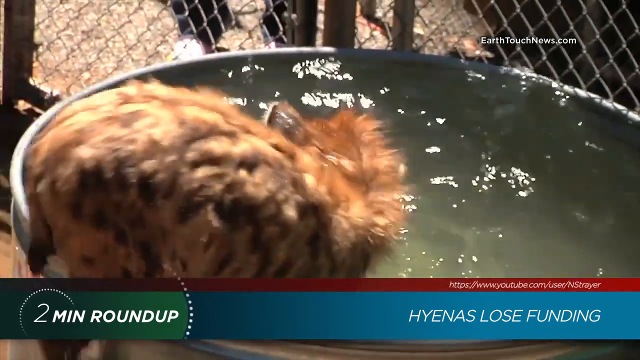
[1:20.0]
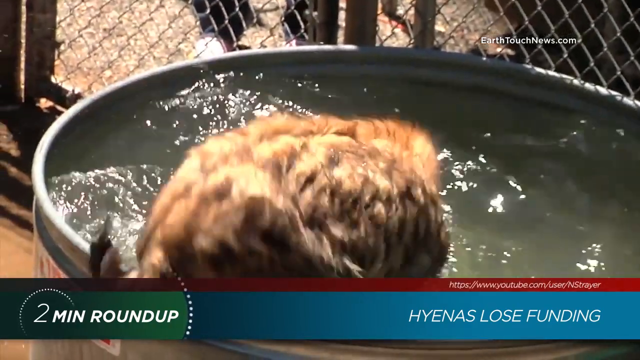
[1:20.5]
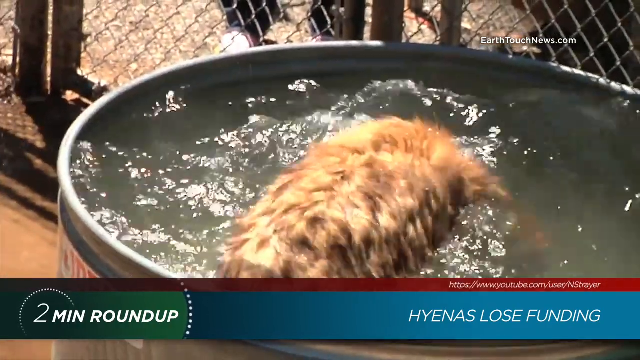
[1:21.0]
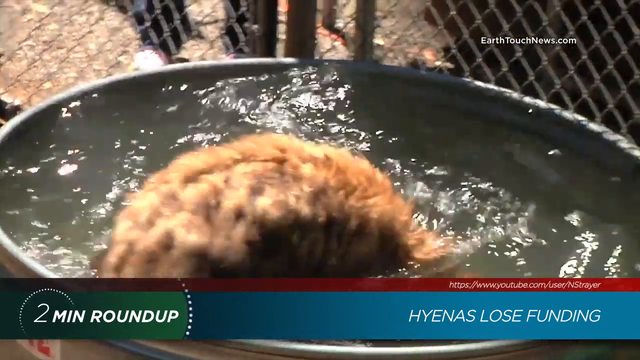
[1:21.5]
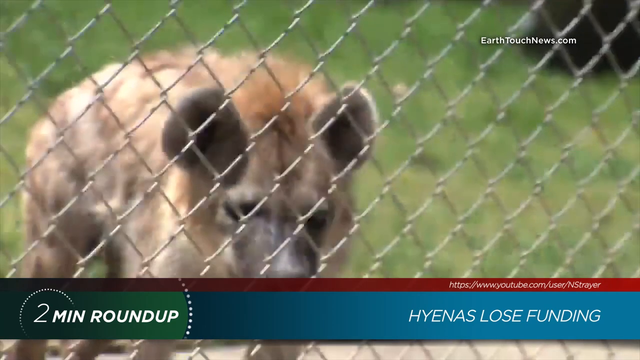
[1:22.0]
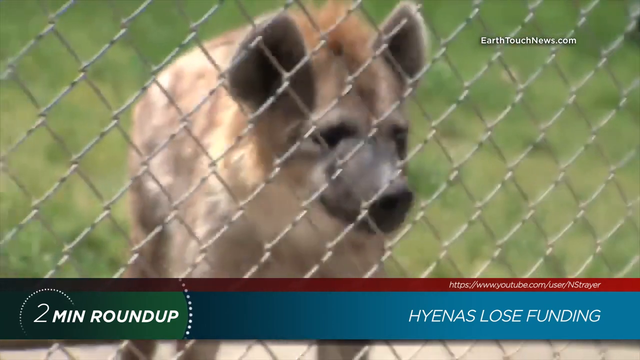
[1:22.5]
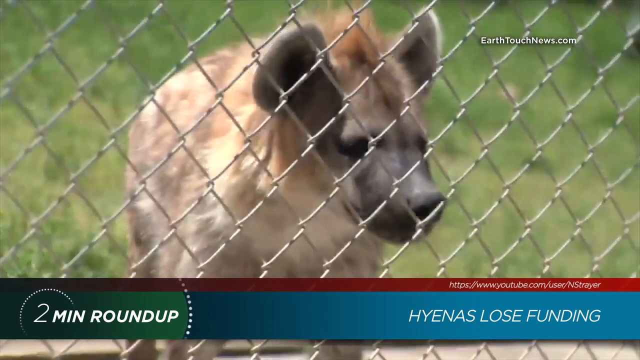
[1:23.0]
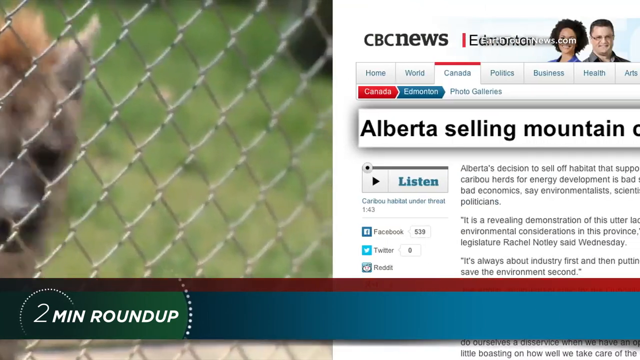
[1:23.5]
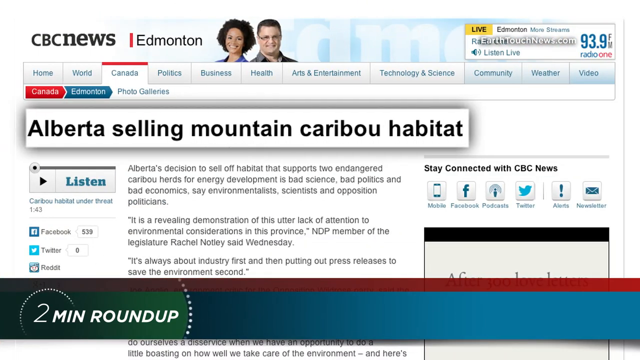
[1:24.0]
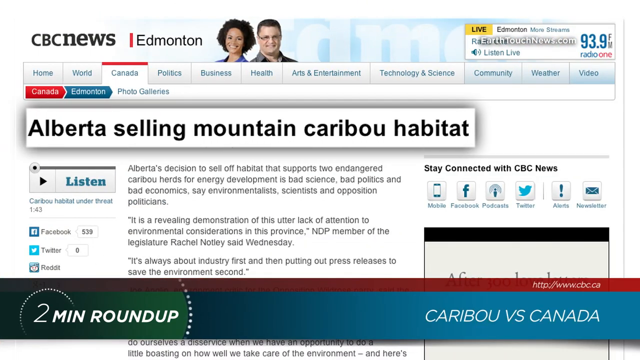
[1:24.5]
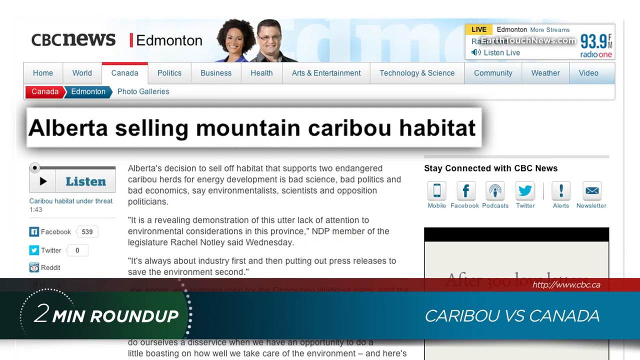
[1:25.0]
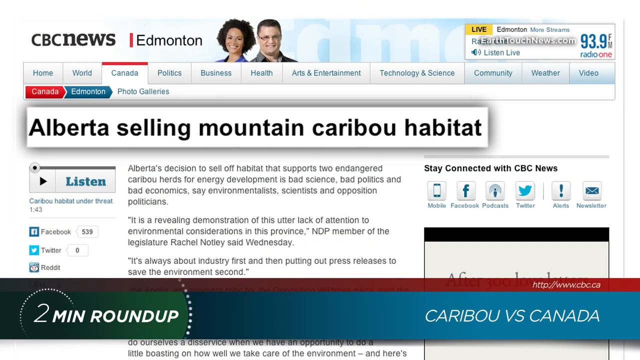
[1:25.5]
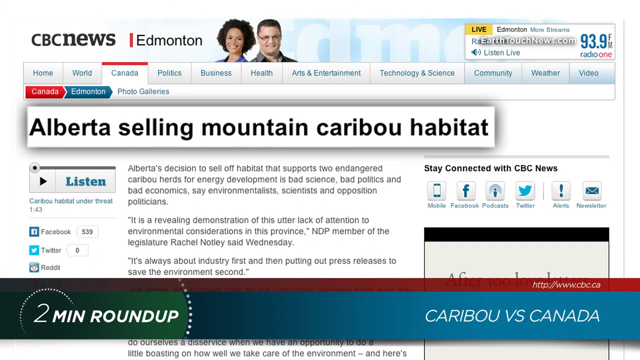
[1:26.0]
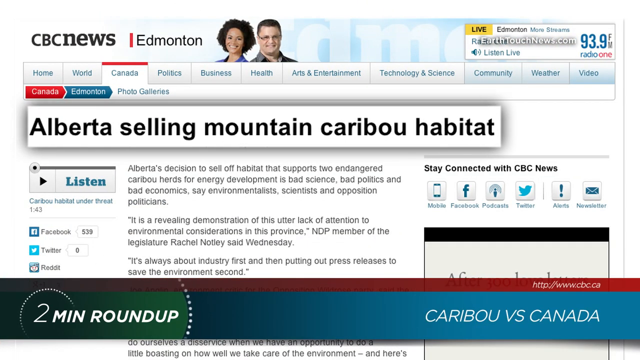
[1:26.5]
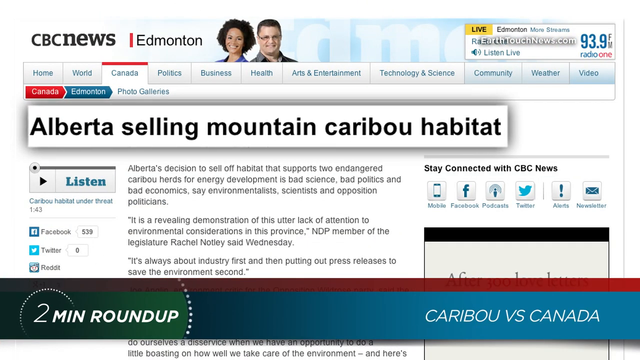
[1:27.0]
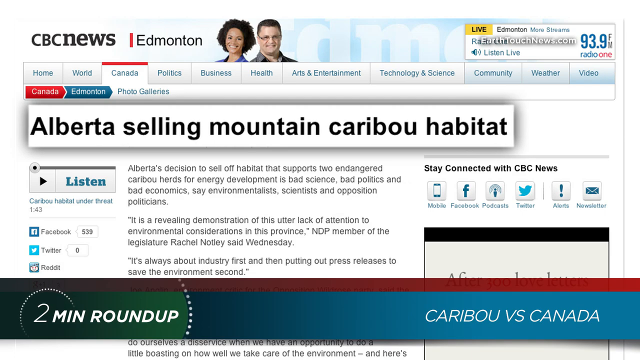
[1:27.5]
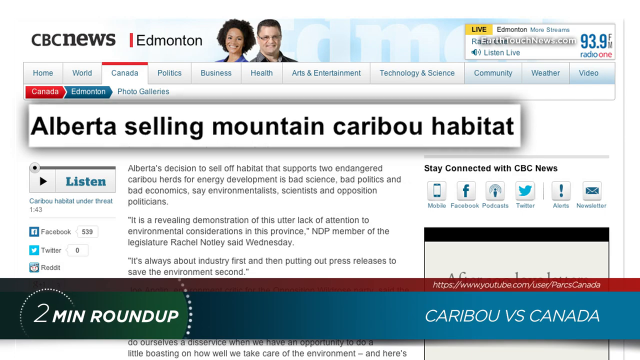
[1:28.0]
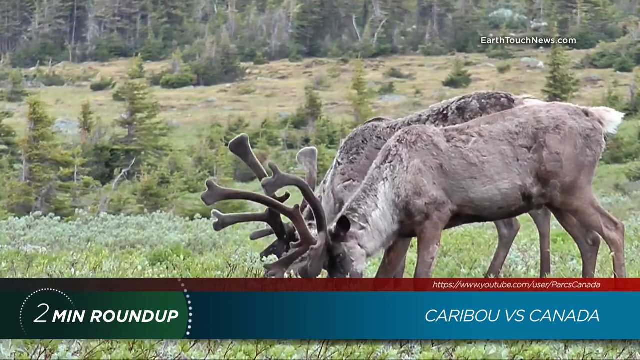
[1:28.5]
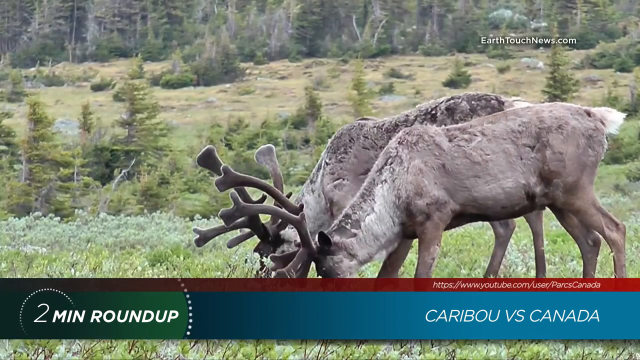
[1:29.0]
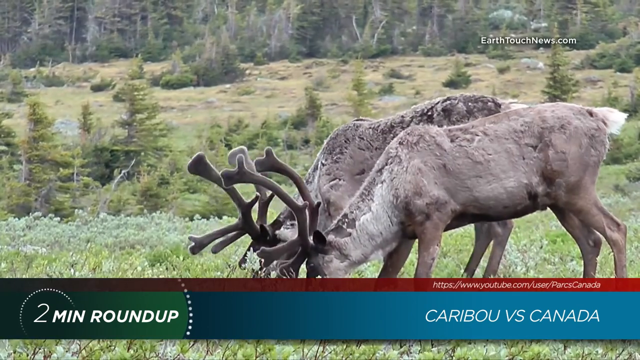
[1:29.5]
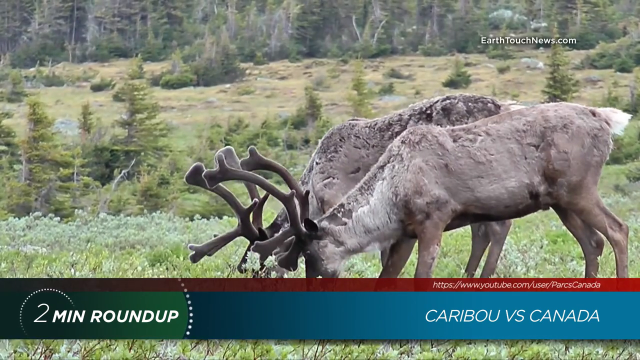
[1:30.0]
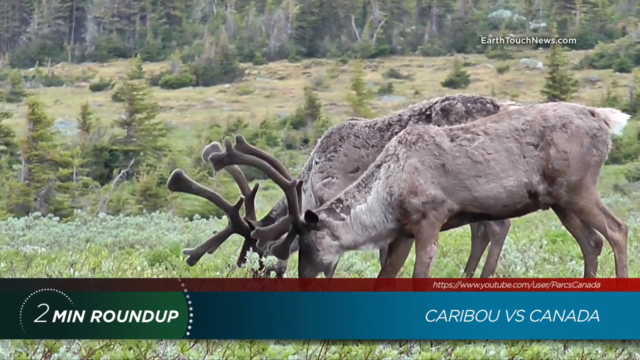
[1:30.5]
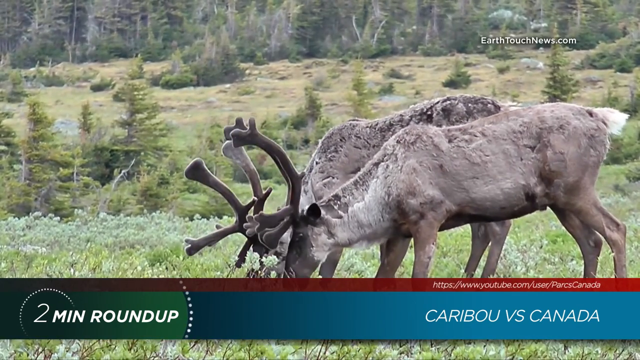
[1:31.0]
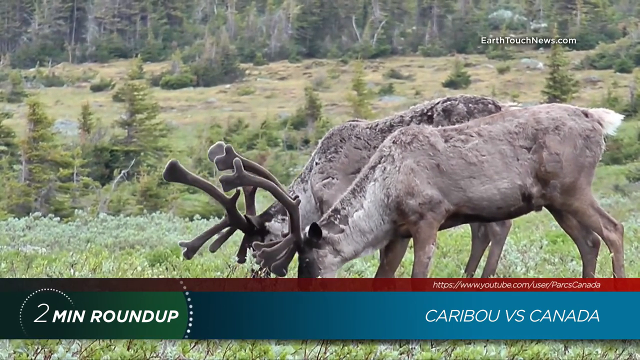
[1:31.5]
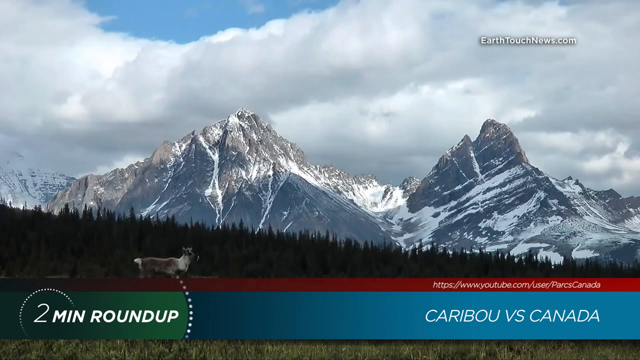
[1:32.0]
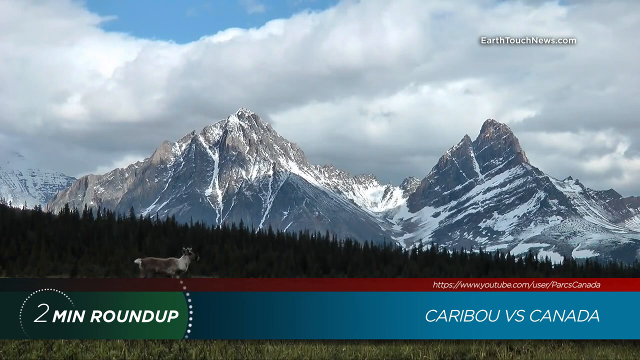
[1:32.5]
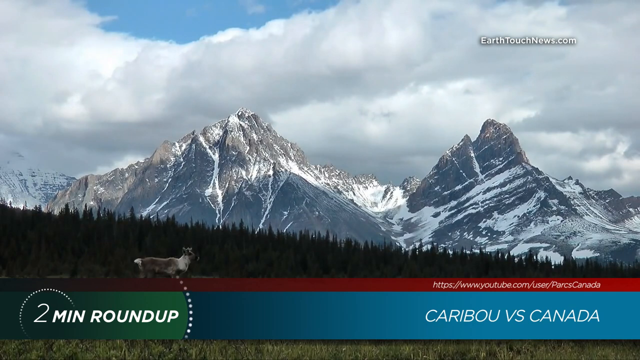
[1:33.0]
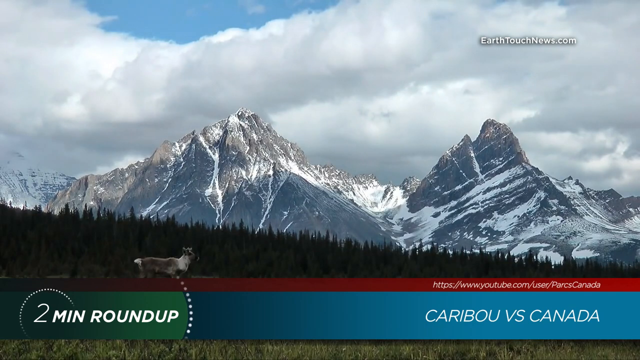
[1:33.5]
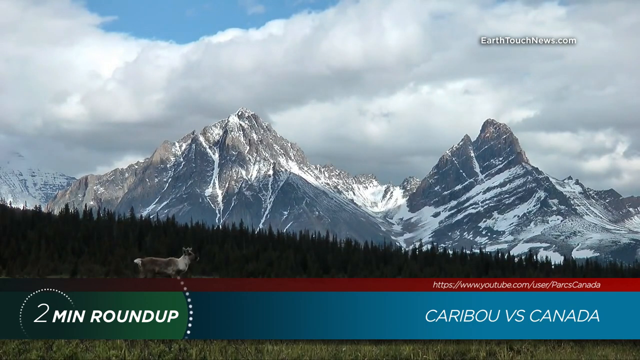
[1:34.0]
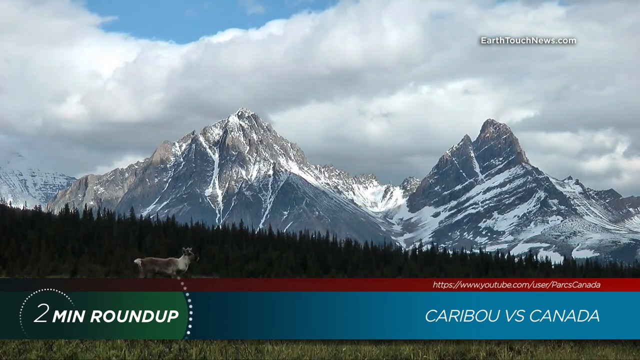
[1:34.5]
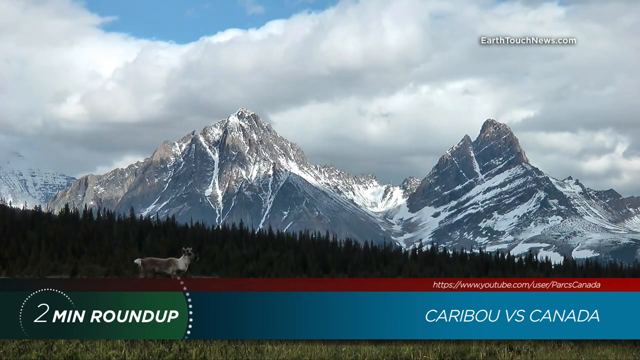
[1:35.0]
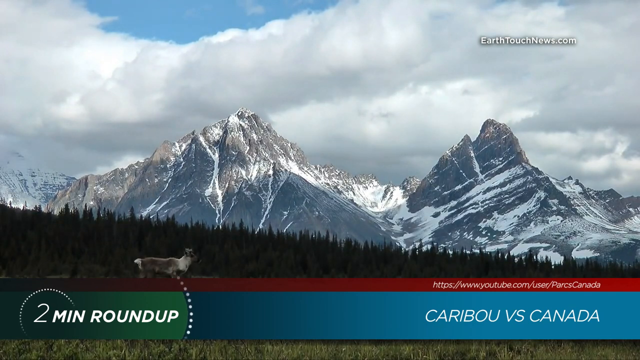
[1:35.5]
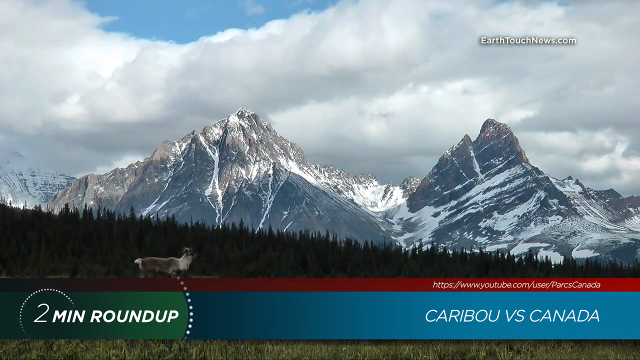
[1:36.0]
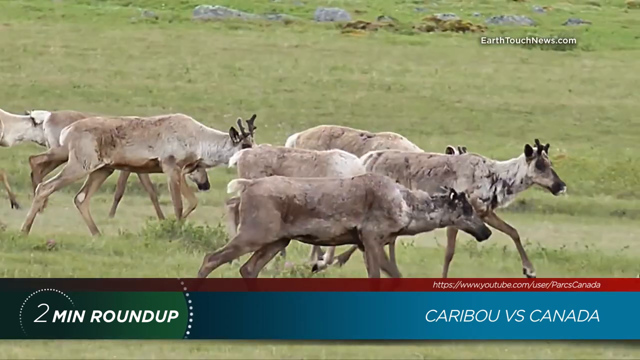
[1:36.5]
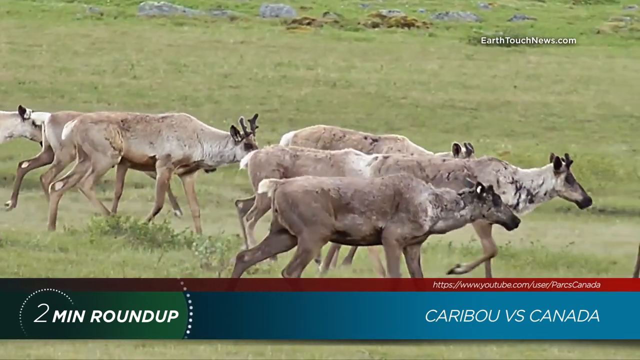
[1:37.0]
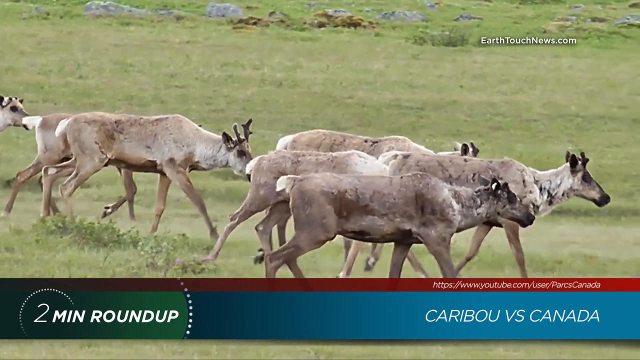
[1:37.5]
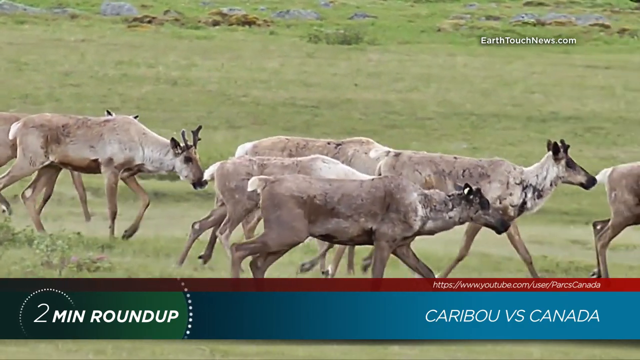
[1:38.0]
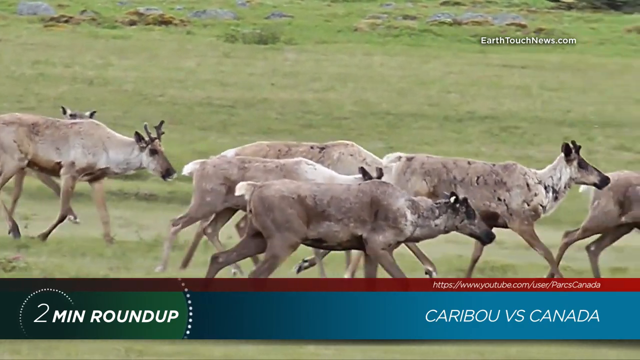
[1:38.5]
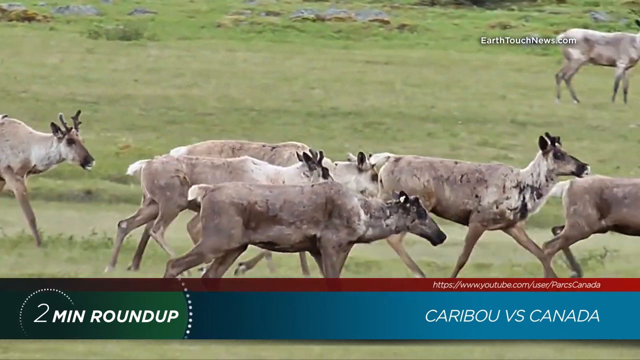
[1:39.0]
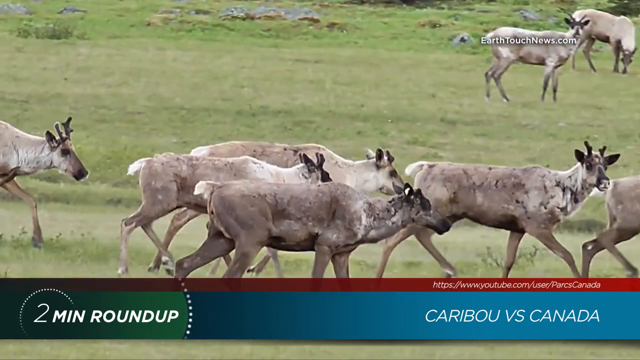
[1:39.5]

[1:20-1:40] What looks like a baby hyena is getting into a big metal tin bucket filled with water. Next, behind a chain-link fence, there is what looks like an adult hyena. The video cuts to a news article reading "CBC News, Edmonton, Alberta selling mountain caribou habitat." An image shows two caribou in a habitat and enclosure, eating grass off the ground. Another shot shows one caribou with snow-capped mountains behind it and trees around the mountains. Then a group of caribou appears, as if they are all migrating together; some have antlers and some do not, and they appear to be in a grass field outside.